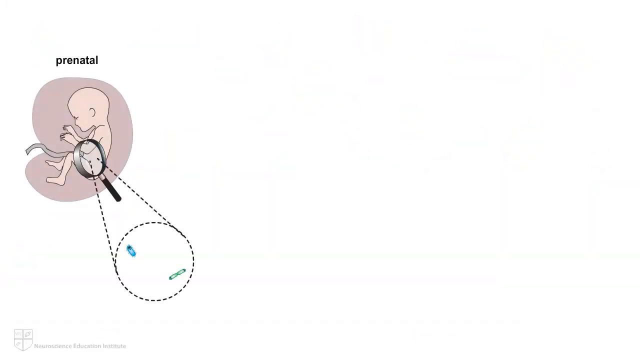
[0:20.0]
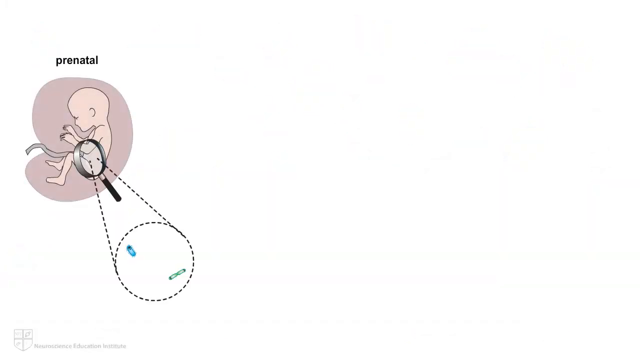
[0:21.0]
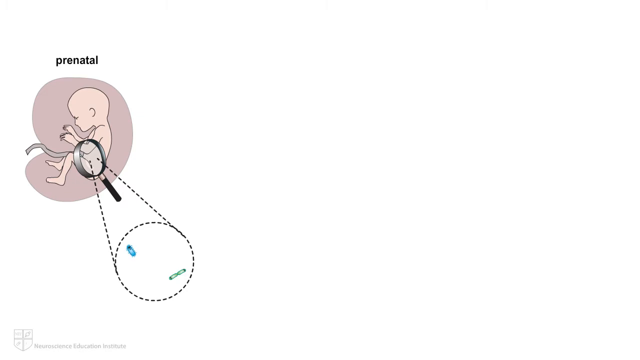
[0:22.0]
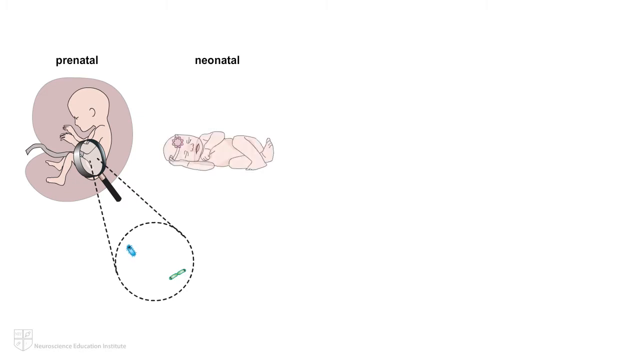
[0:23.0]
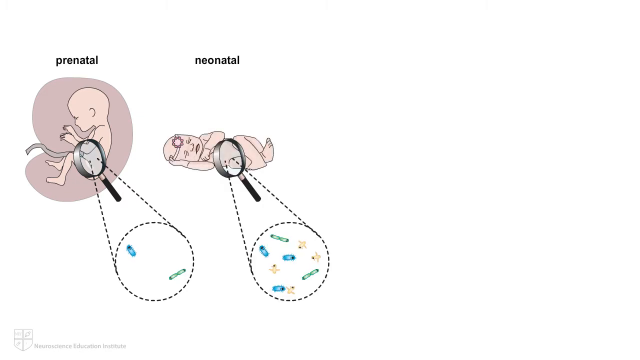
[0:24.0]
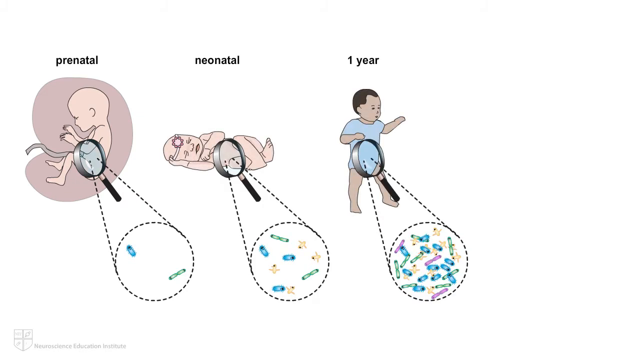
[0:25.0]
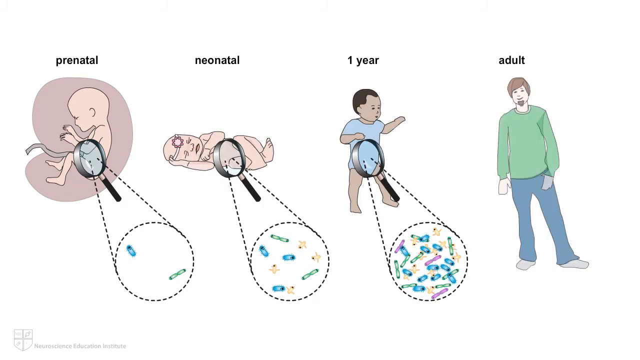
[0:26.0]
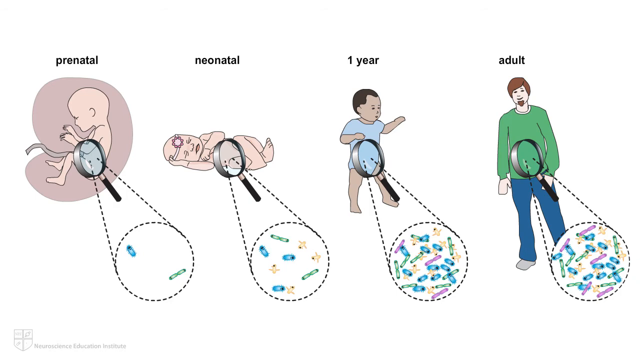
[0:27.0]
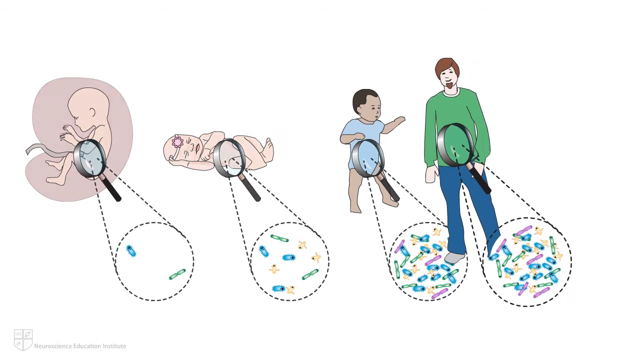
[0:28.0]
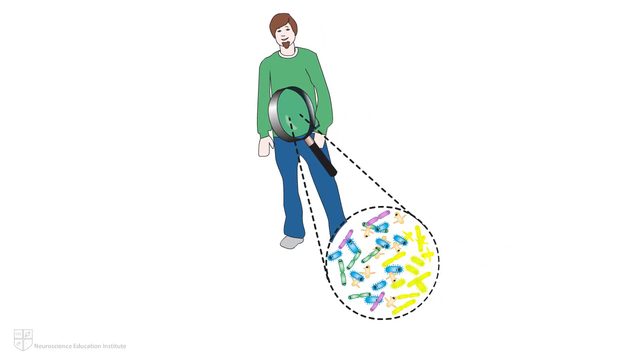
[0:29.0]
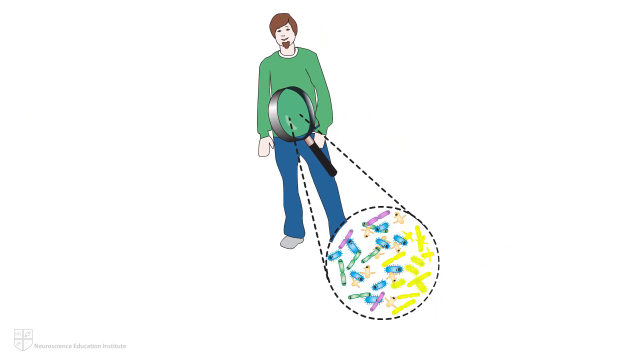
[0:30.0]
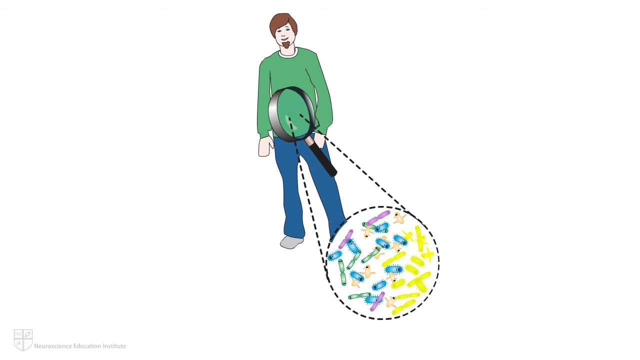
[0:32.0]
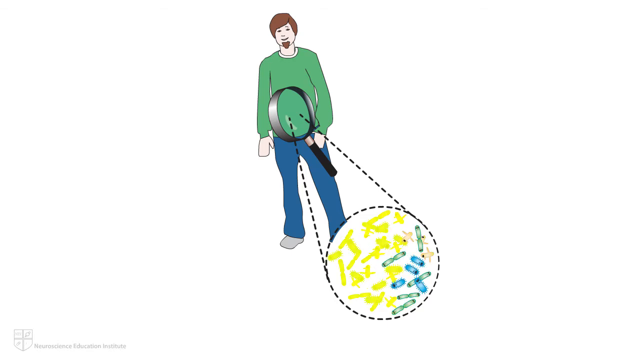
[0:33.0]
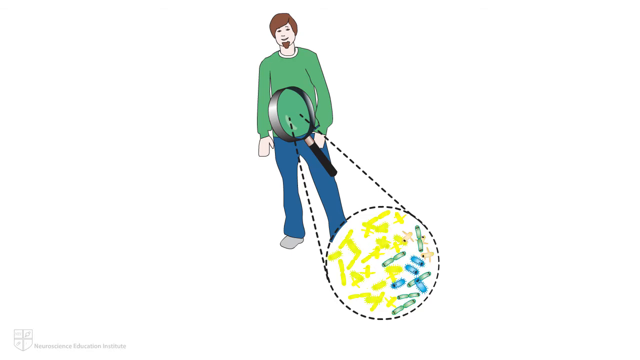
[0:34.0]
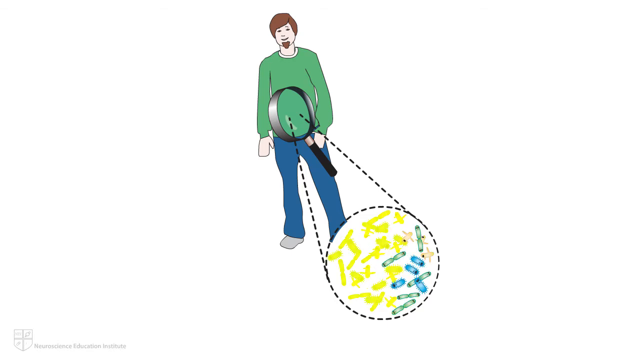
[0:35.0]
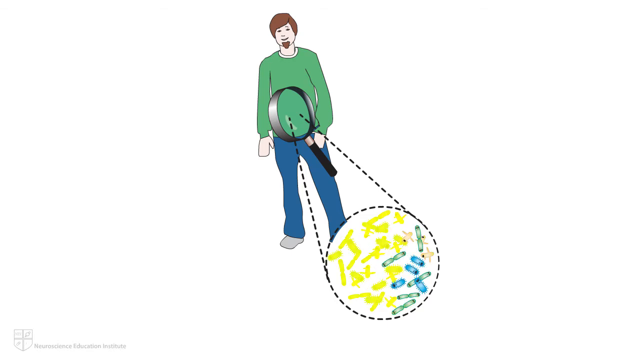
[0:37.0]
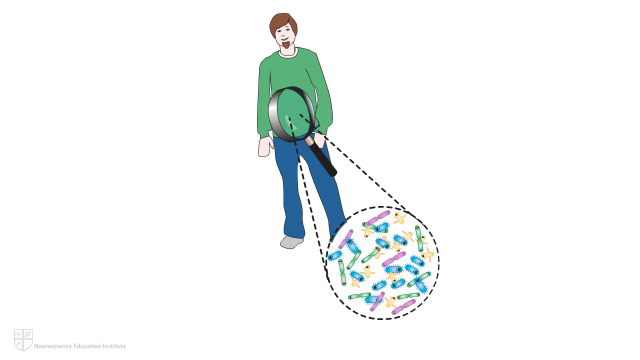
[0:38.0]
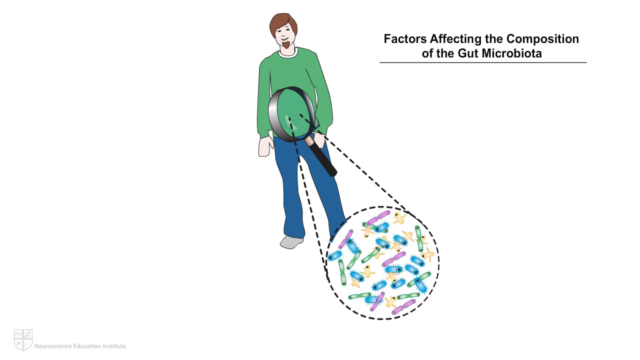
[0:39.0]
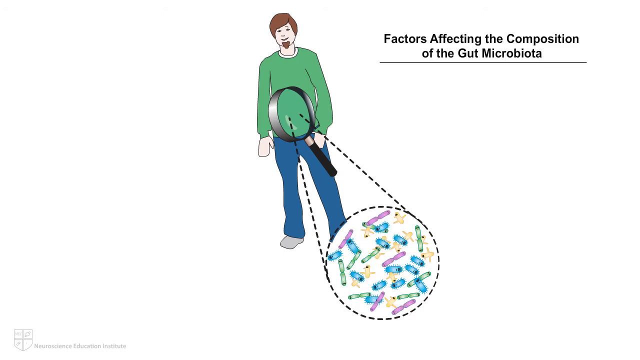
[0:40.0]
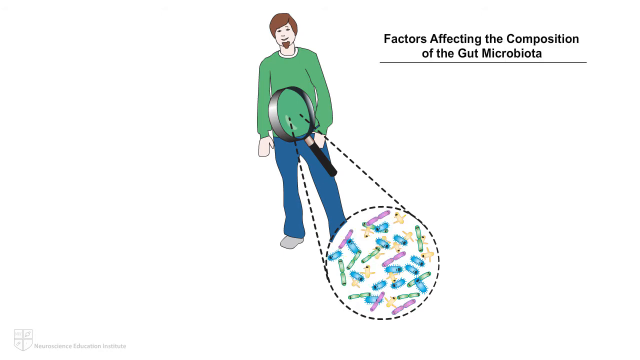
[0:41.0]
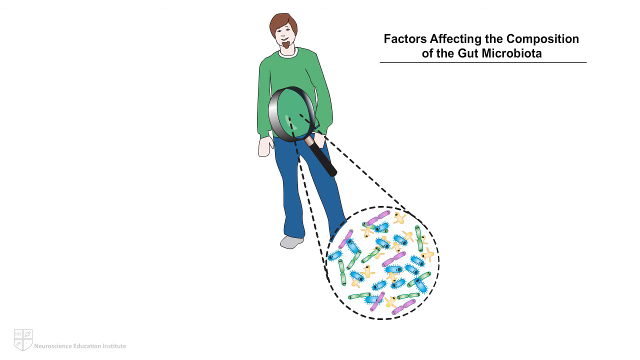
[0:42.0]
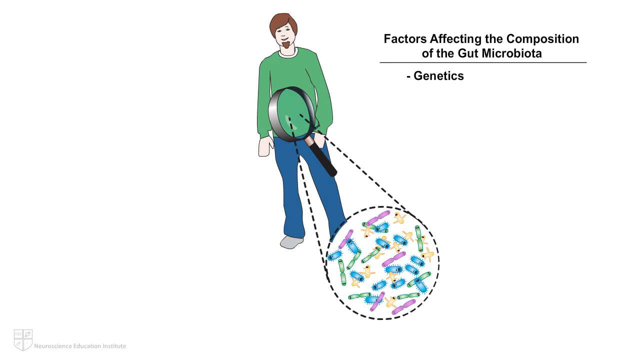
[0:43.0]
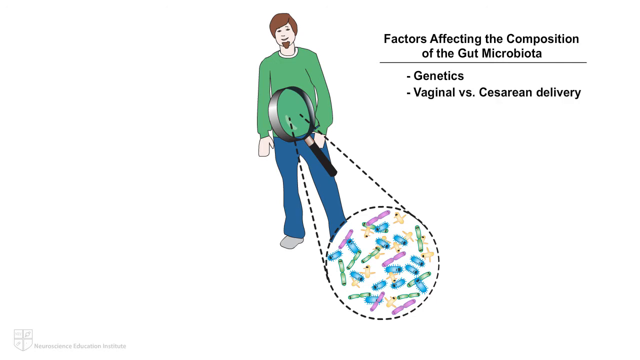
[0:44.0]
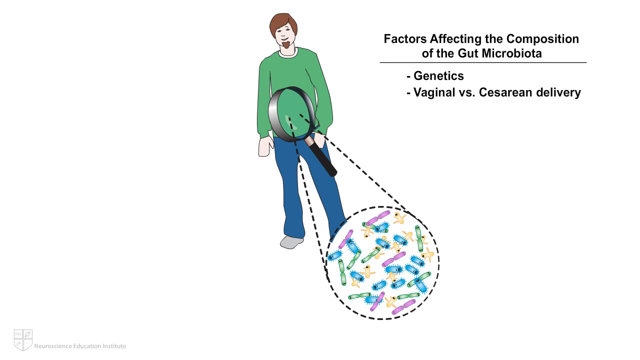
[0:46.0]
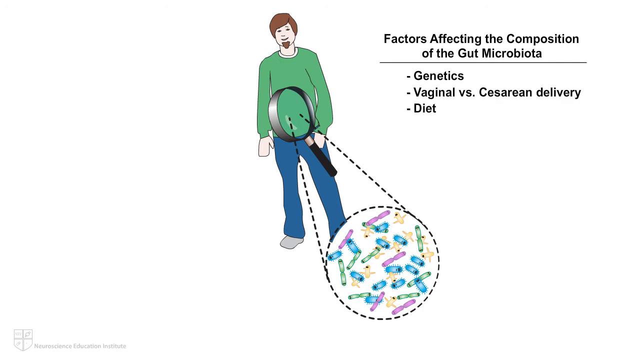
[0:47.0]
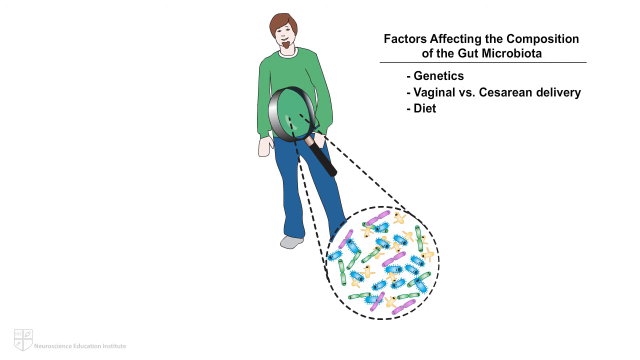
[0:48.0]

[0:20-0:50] On the left side of the screen is a drawing of a baby in a womb, facing left, with an umbilical cord coming from its stomach. Above the drawing, black text in all lowercase letters reads "prenatal". A magnifying glass is in the foreground above the baby, and two black lines come from it to form a circle with a dotted line. Inside the dotted circle are cartoon bacteria: a blue cylinder with a smile, and two green cylinders joined at their base with faces and eyes on the opposing sides. Then a new drawing appears to the right of the prenatal baby, labeled "neonato". It shows a baby lying on its right side with its head resting on its right hand, wearing a white headband with a pink flower. A magnifying glass is in the foreground above its stomach, with dotted black lines from it forming a circle filled with yellow, blue and green cartoon bacteria, significantly more than in the prenatal one. Next, a drawing of a toddler appears, labeled "one year". A magnifying glass is above its stomach, with the same dotted black line circle holding five times the amount of bacteria, now including purple cartoon bacteria as well.